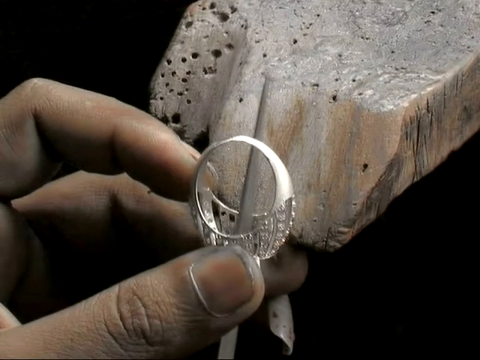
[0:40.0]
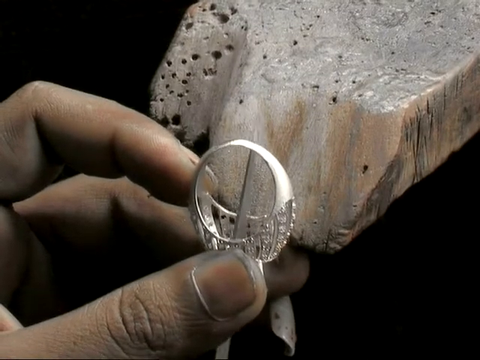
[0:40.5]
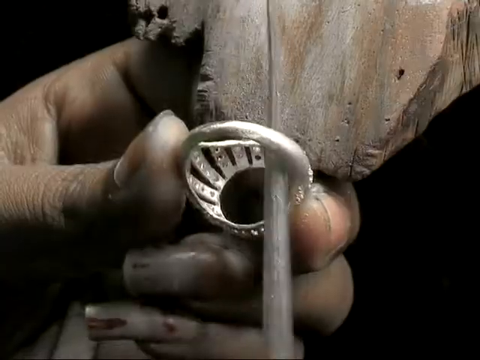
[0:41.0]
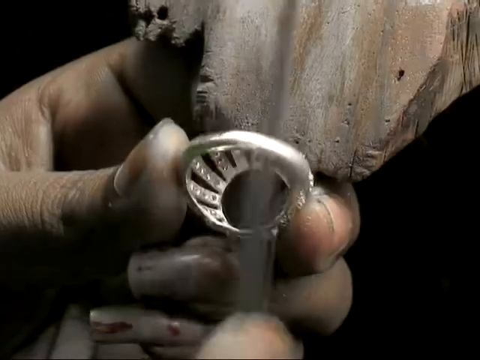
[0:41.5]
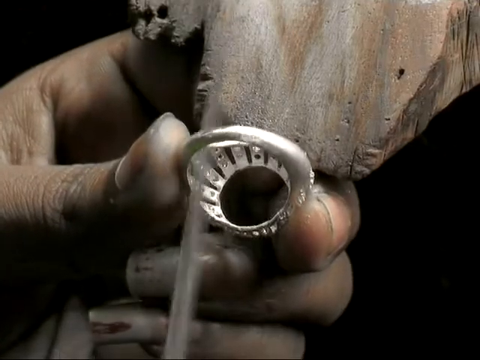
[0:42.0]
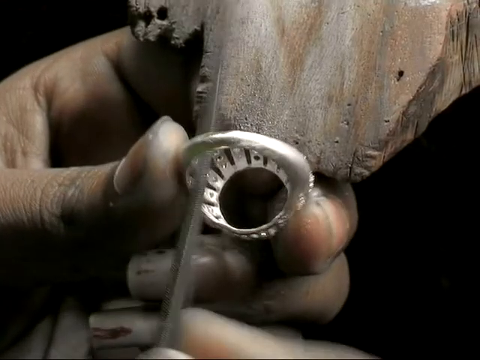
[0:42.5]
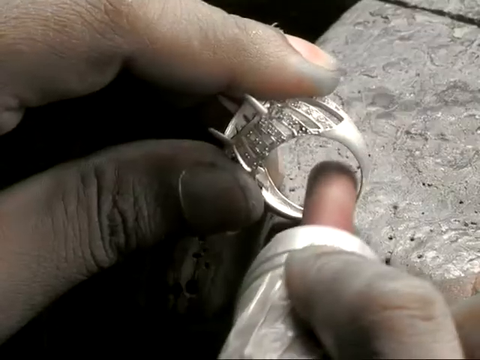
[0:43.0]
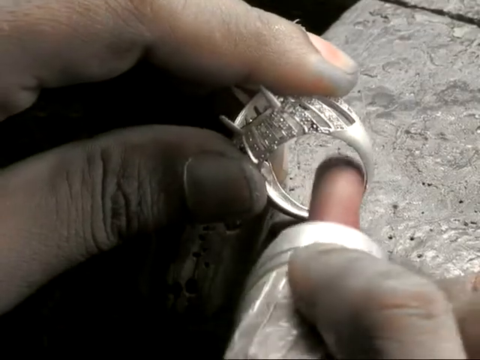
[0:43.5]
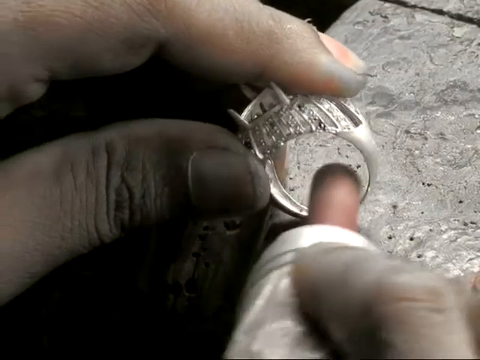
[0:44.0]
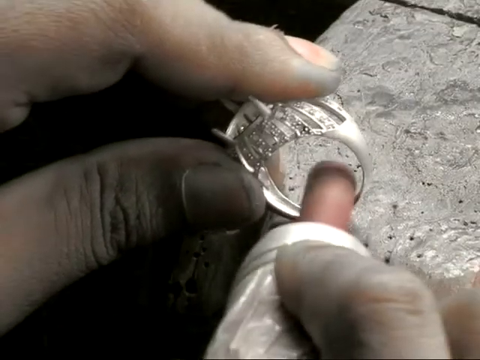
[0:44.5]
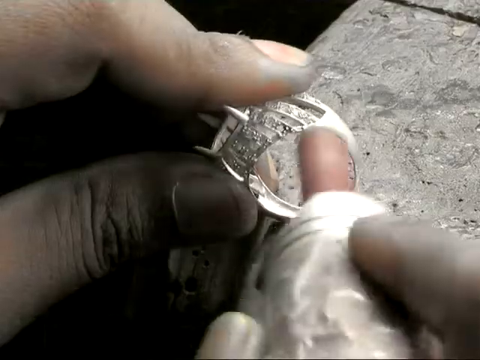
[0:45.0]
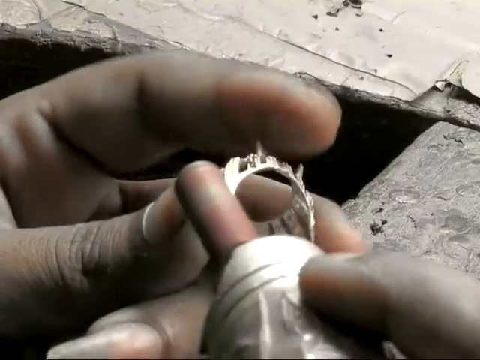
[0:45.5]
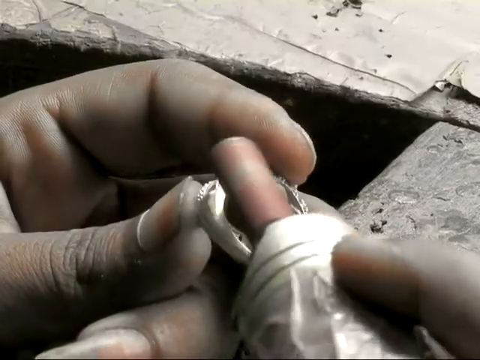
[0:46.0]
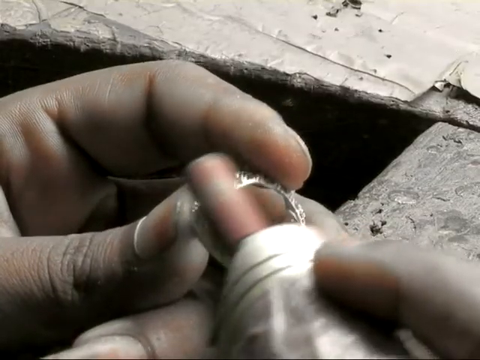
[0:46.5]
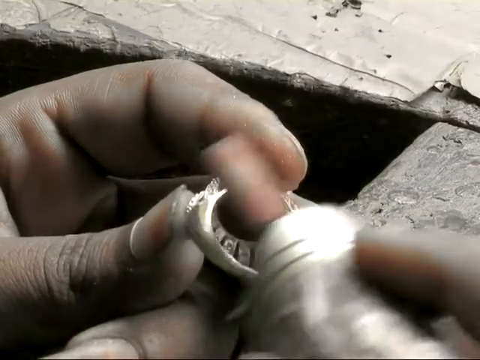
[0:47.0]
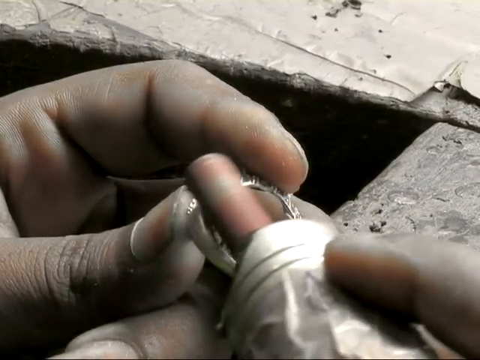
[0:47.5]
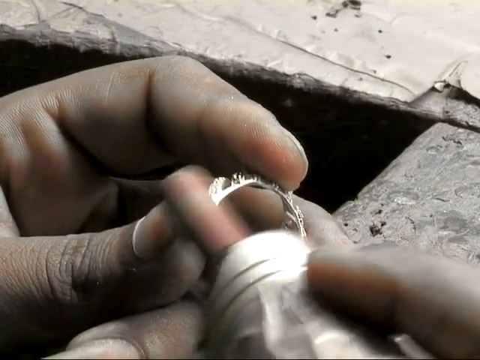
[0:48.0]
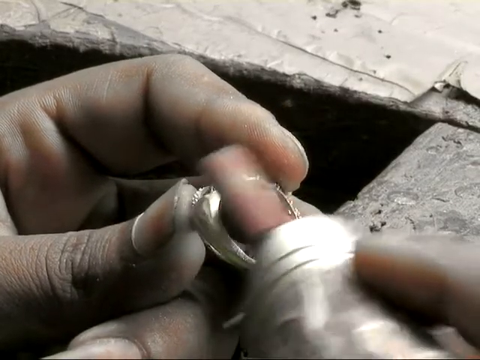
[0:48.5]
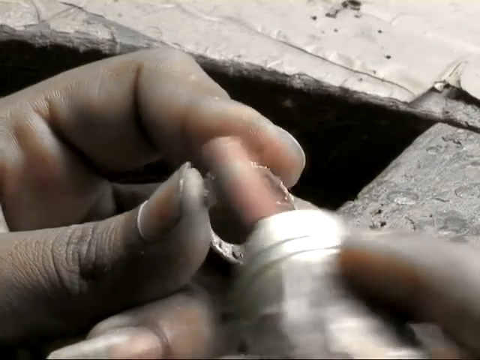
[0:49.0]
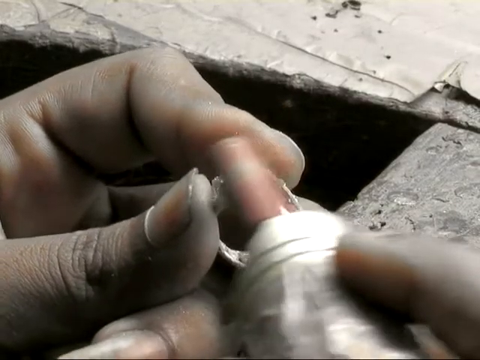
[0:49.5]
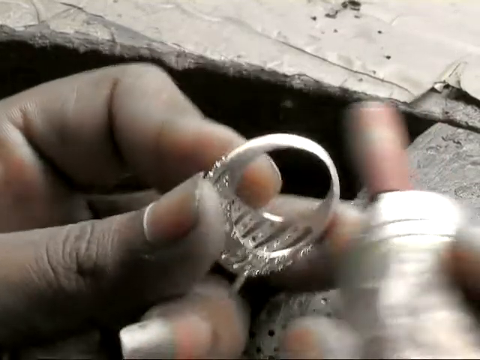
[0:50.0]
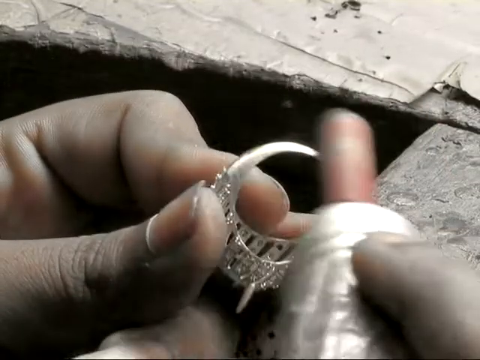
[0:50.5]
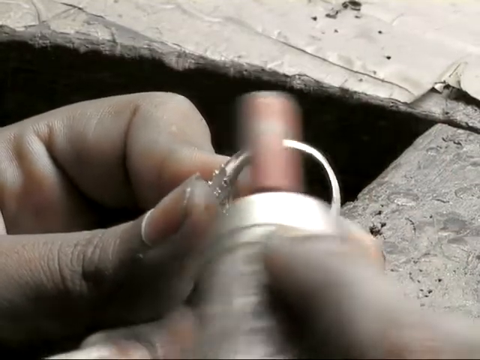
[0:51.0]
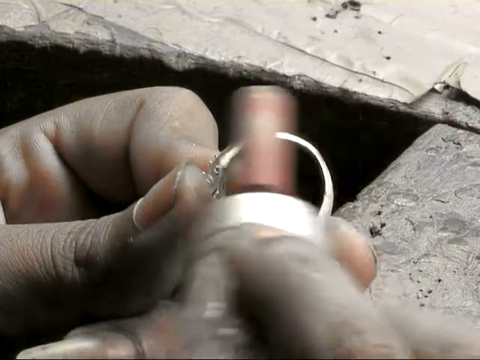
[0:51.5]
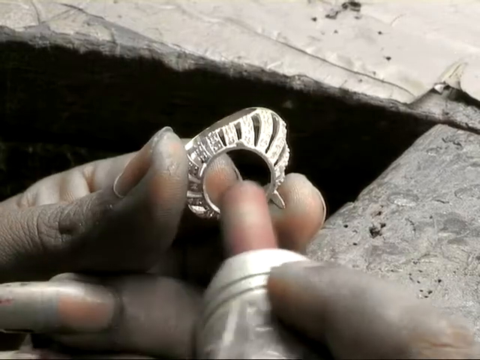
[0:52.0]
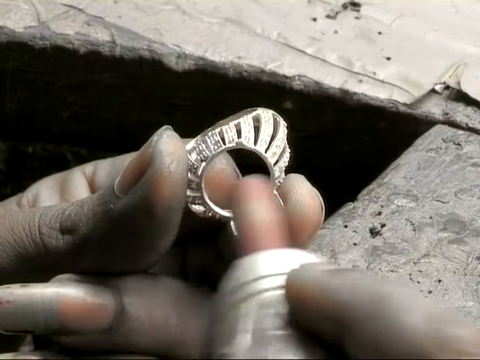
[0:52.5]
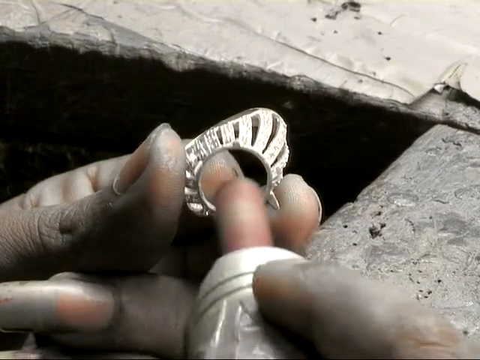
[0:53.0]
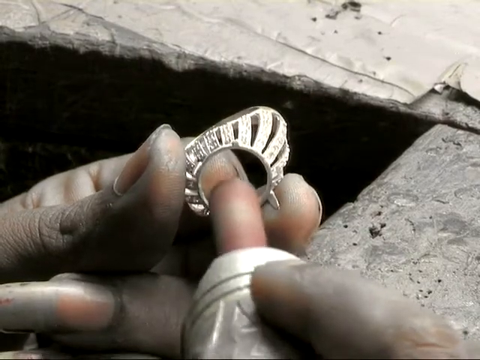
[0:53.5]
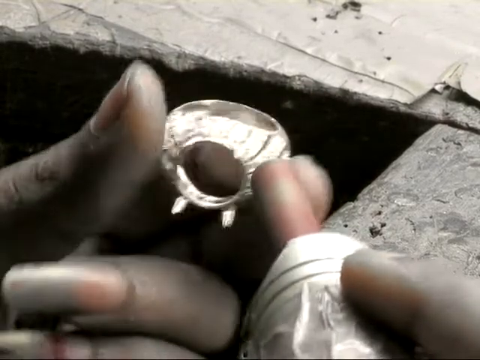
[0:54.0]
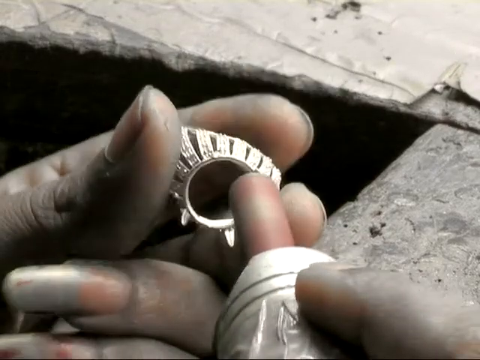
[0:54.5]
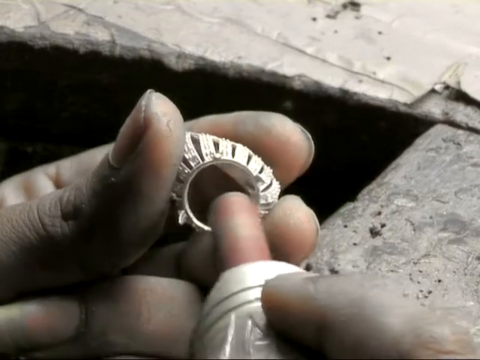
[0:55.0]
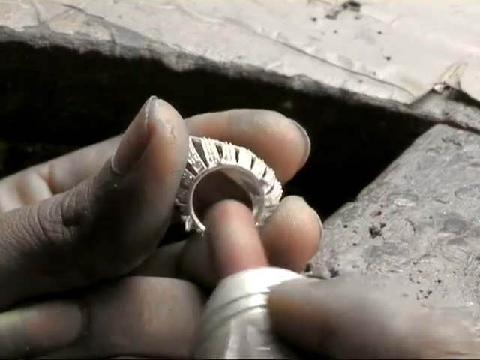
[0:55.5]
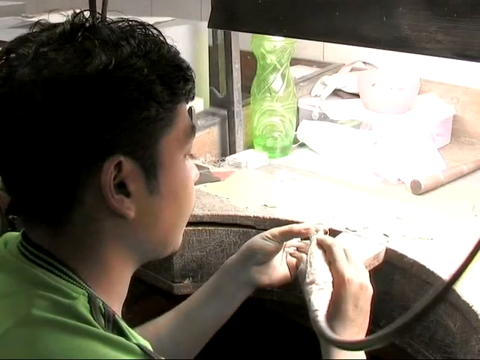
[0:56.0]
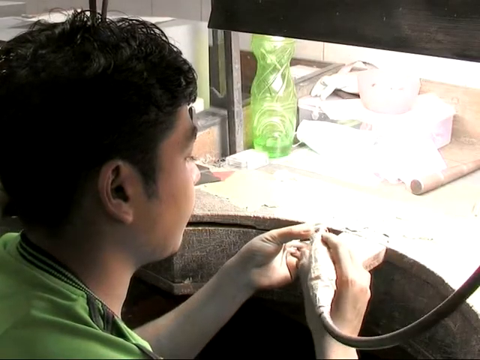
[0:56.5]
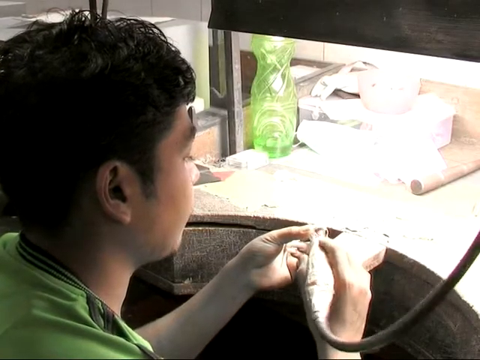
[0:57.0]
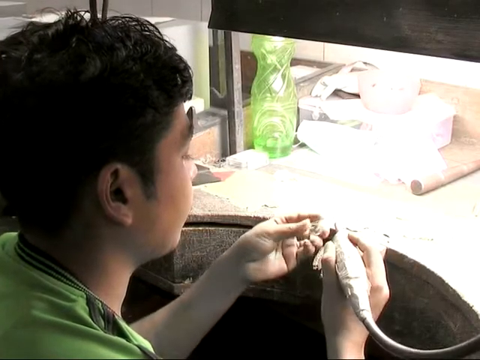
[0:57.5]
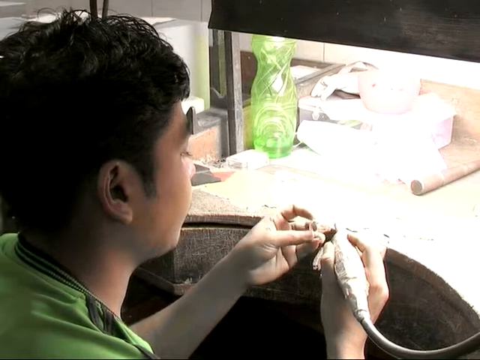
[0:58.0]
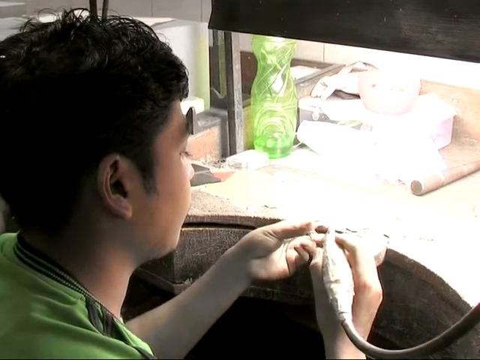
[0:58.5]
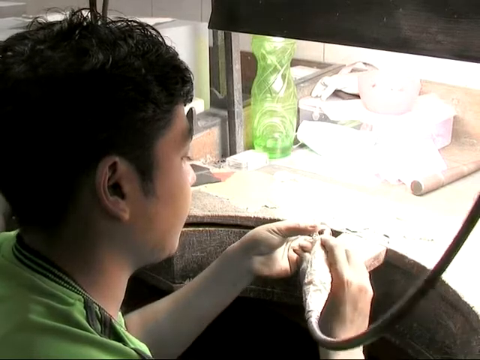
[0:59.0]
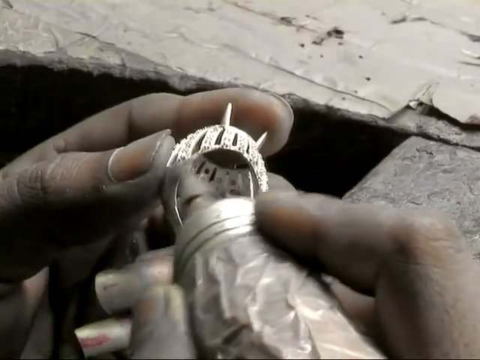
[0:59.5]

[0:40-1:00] The ring is very shiny, with a light blue gem and a silver-like fence that goes around the finger. It seems aimed at a woman getting engaged or married, or to be gifted as a promise ring. The name at the bottom says "Taurus" by Glenn Lira. The video shows clips of how the design for the ring came about, and the camera zooms out to reveal that the plans were being drafted on a laptop.